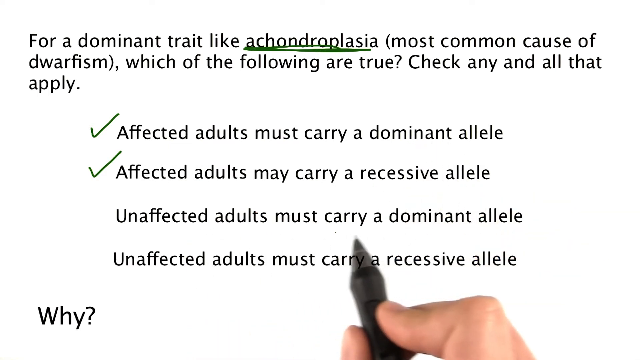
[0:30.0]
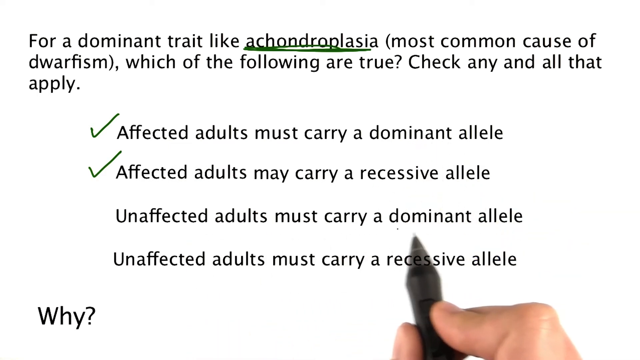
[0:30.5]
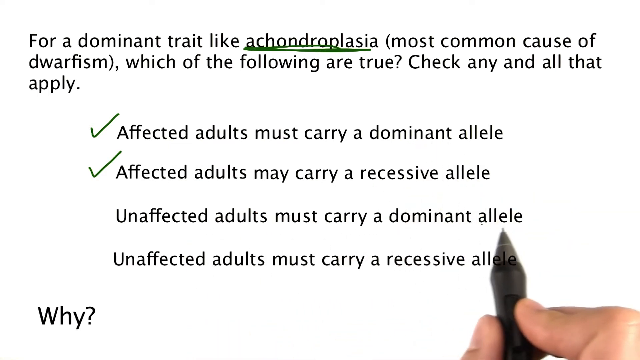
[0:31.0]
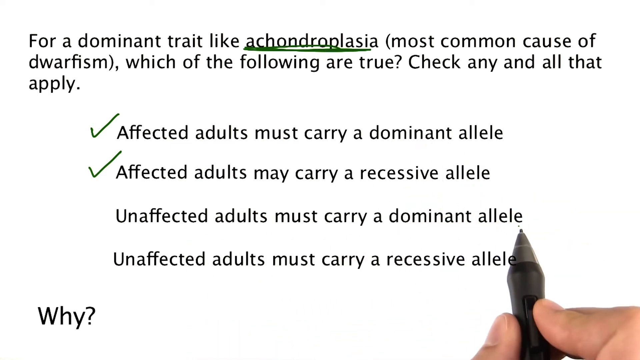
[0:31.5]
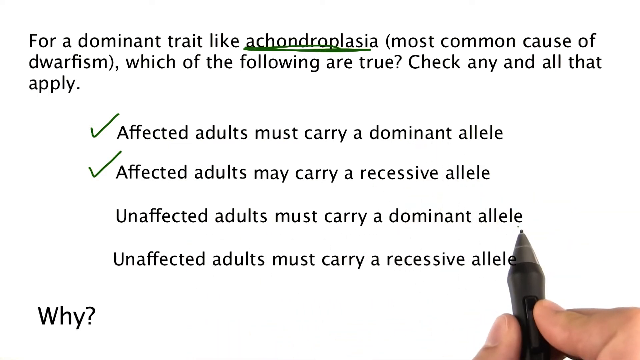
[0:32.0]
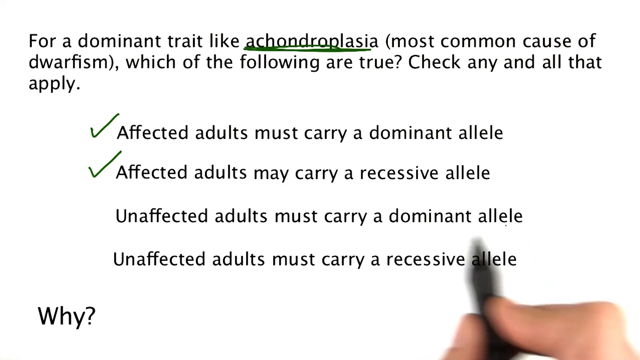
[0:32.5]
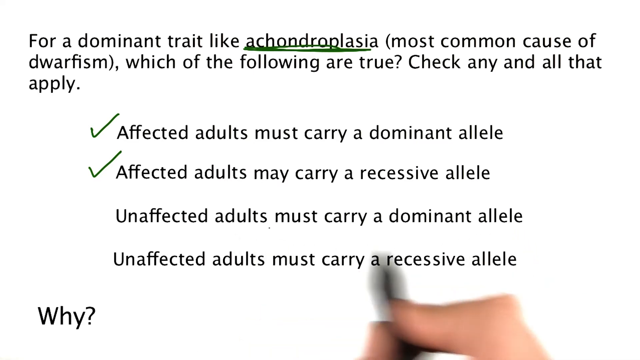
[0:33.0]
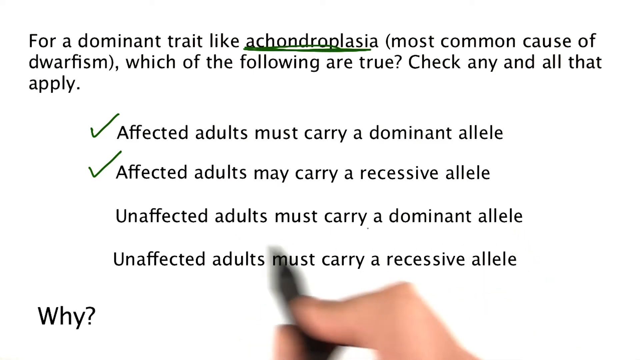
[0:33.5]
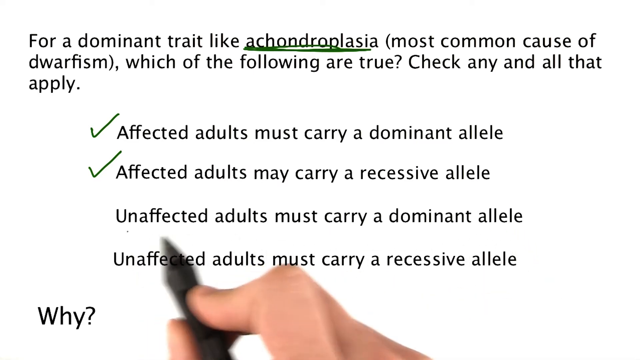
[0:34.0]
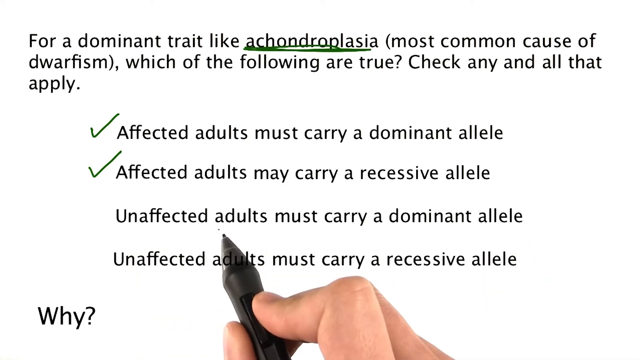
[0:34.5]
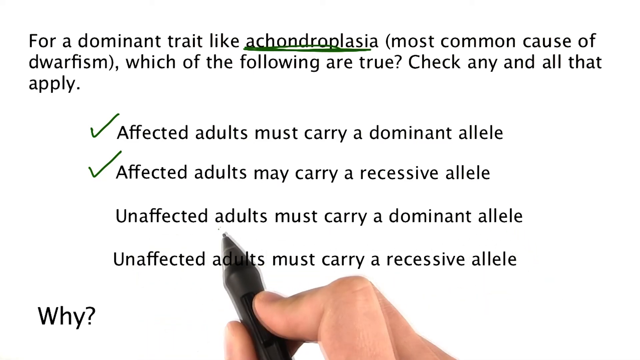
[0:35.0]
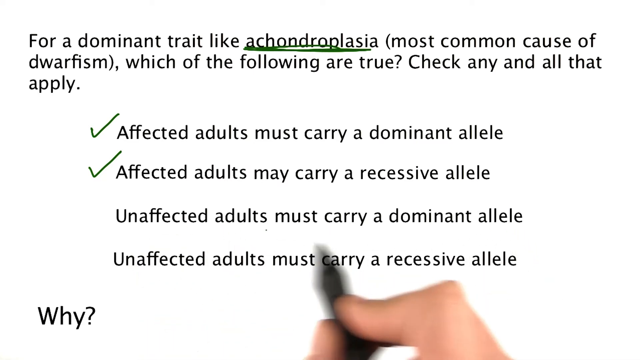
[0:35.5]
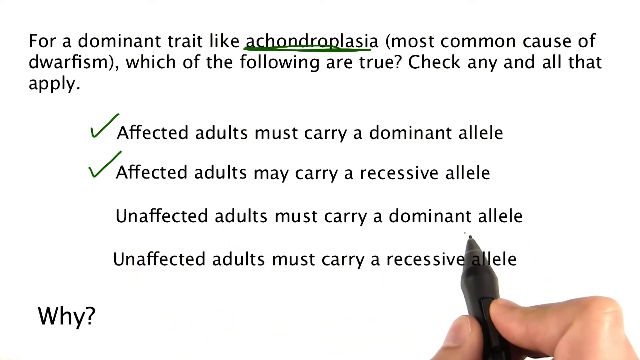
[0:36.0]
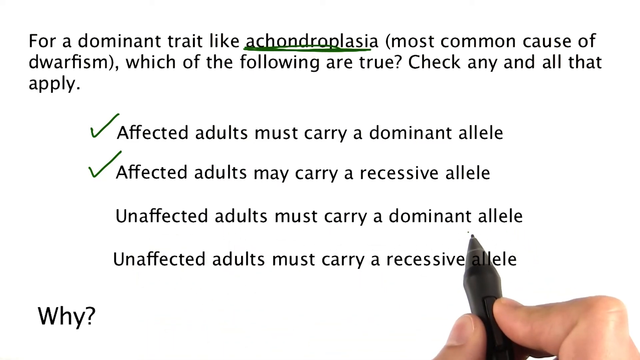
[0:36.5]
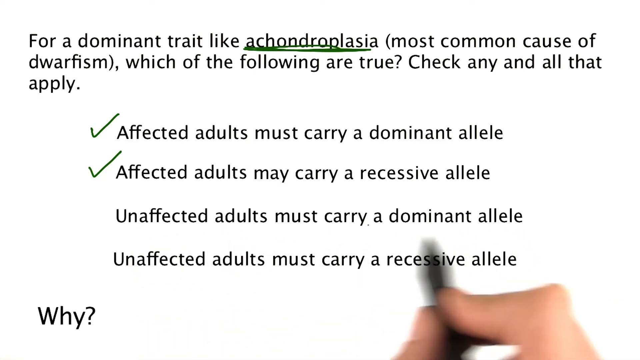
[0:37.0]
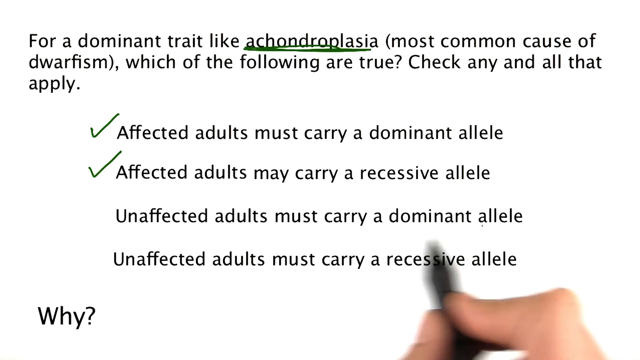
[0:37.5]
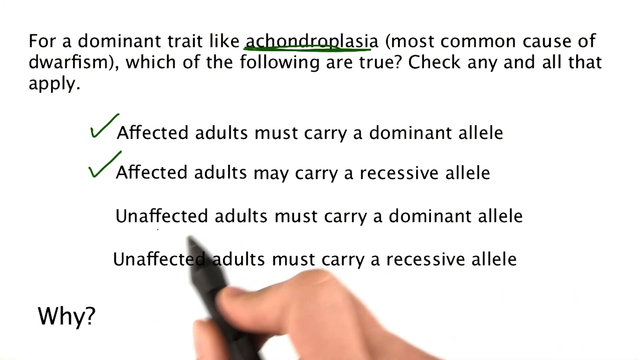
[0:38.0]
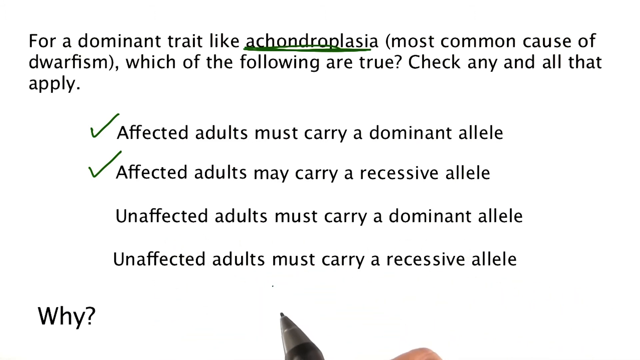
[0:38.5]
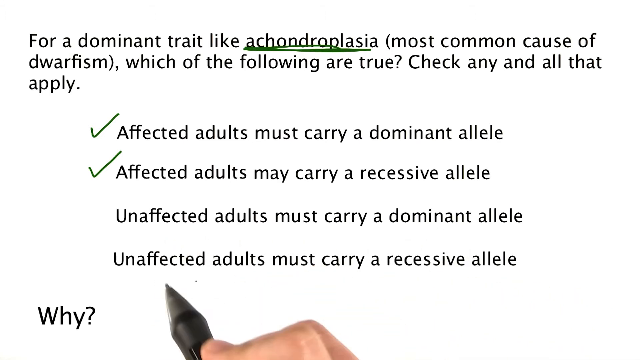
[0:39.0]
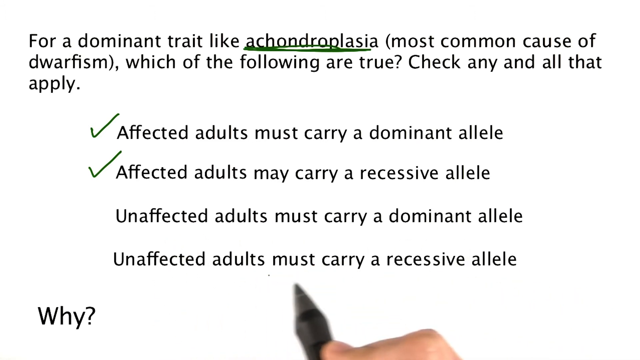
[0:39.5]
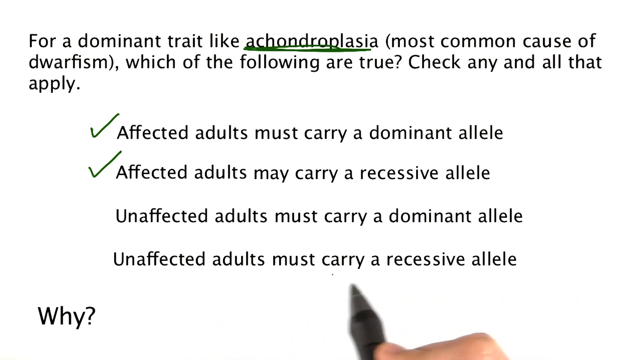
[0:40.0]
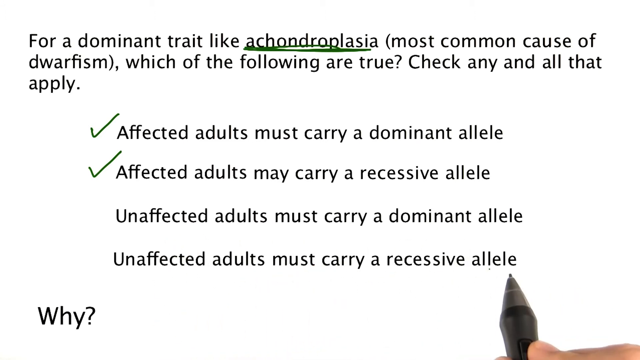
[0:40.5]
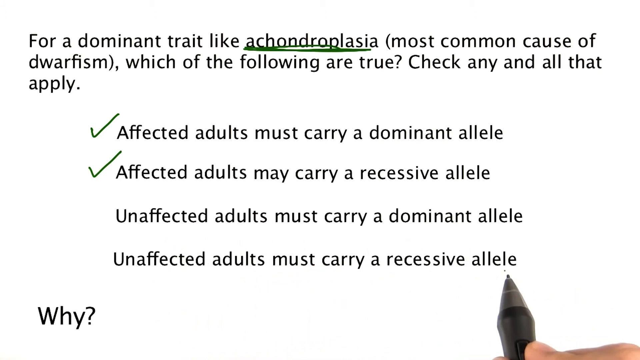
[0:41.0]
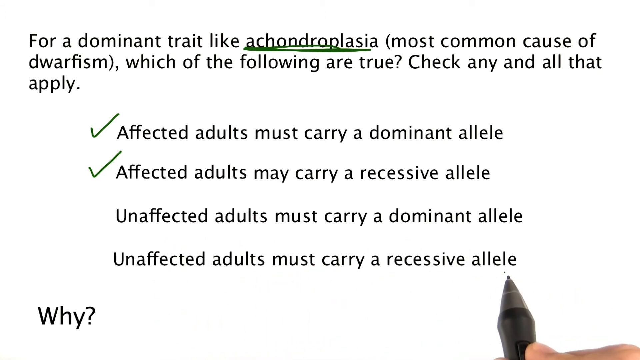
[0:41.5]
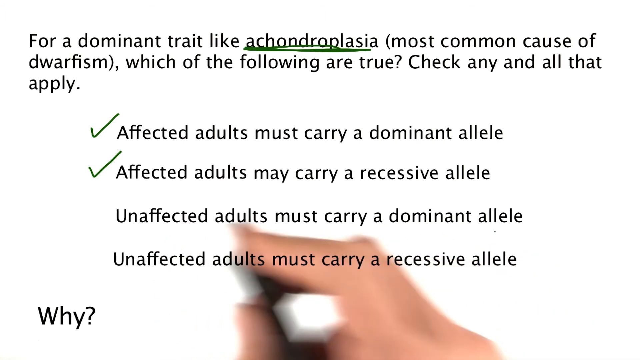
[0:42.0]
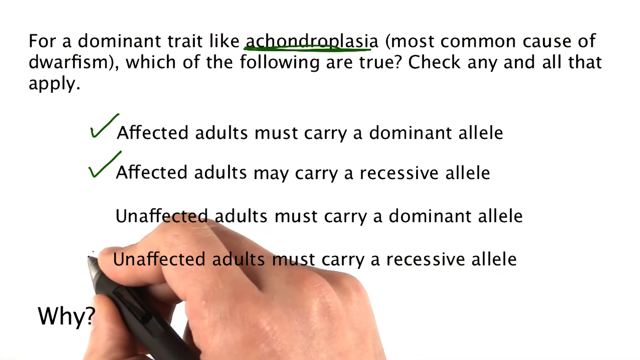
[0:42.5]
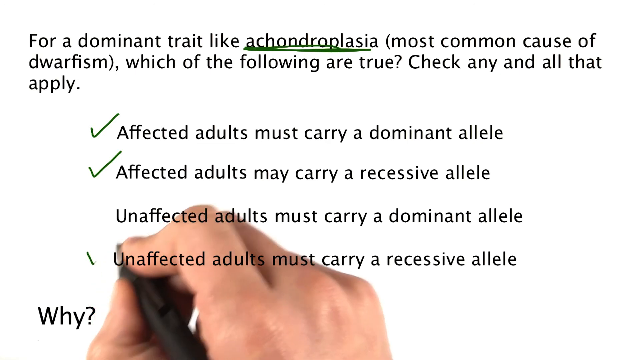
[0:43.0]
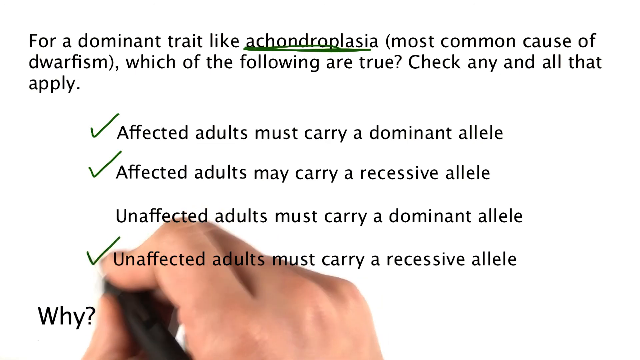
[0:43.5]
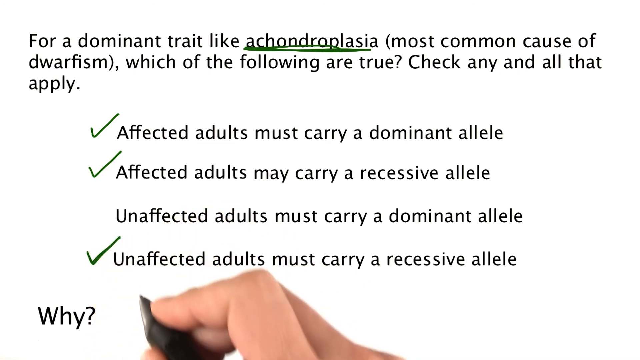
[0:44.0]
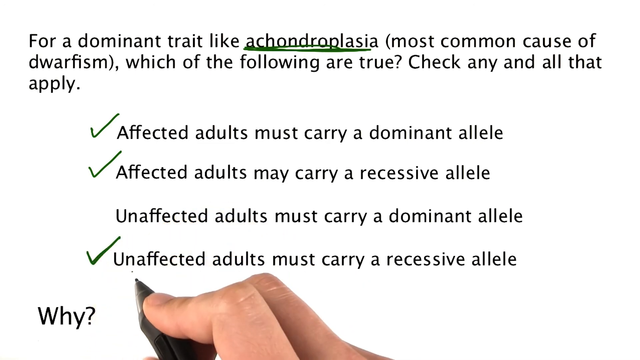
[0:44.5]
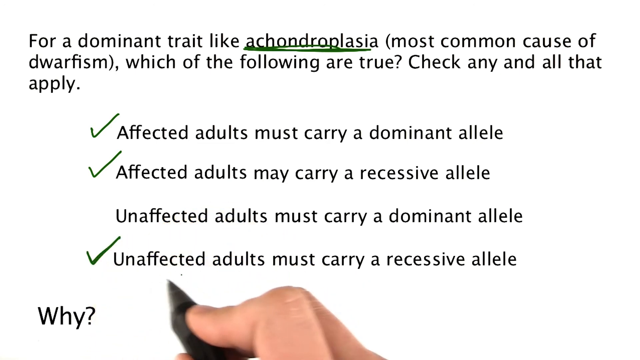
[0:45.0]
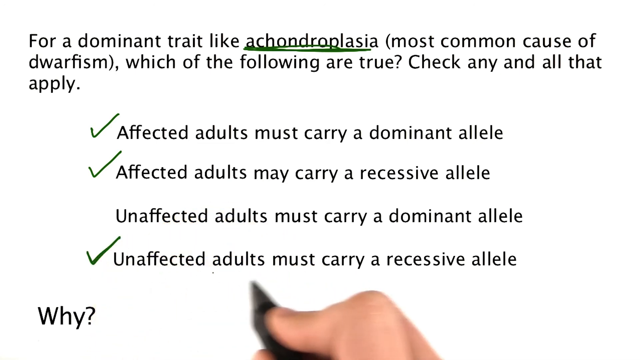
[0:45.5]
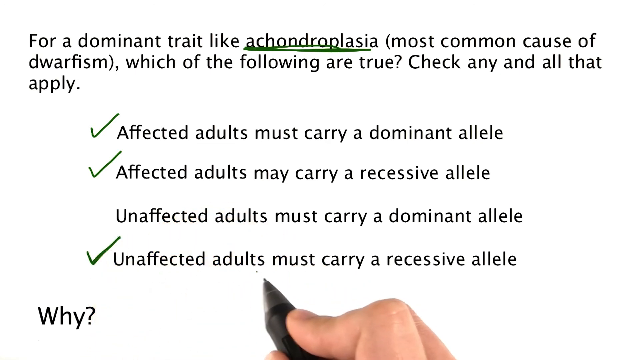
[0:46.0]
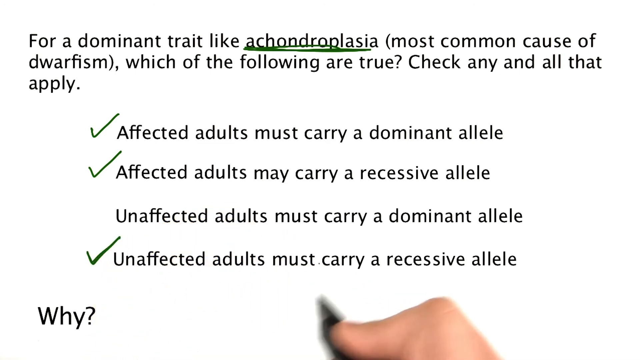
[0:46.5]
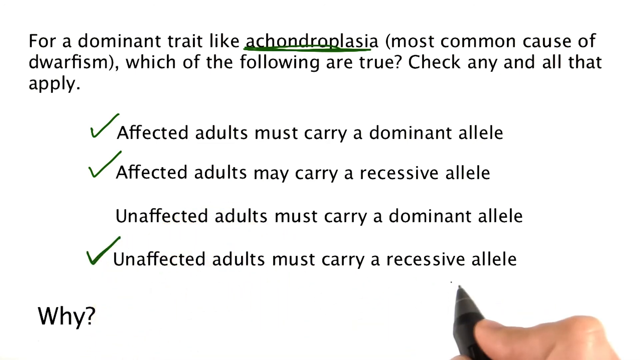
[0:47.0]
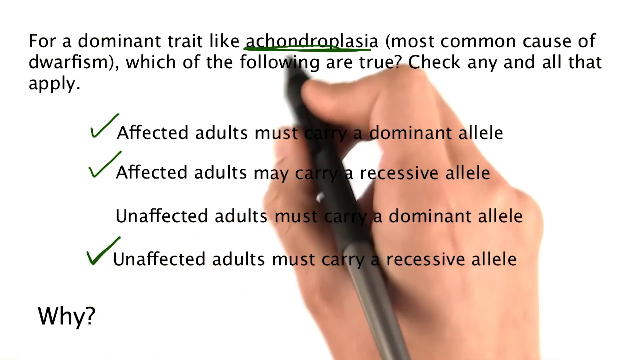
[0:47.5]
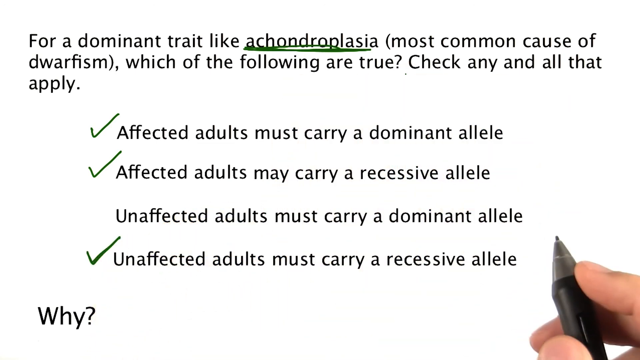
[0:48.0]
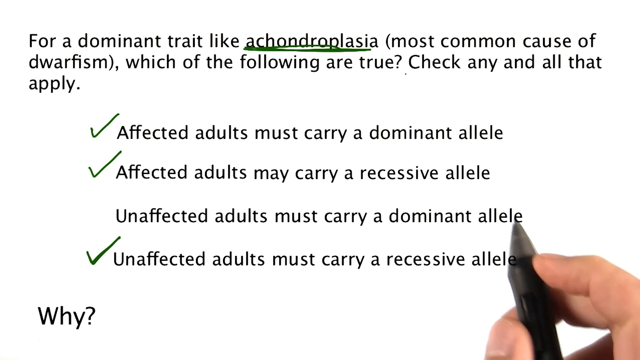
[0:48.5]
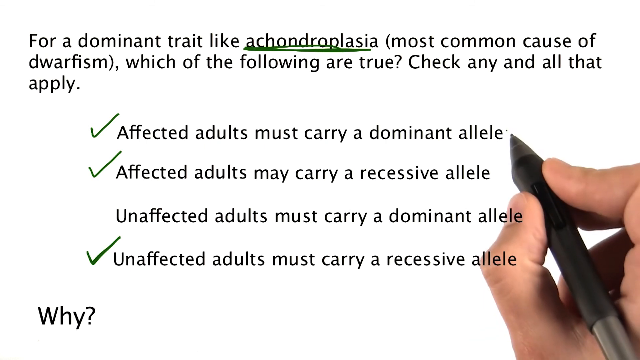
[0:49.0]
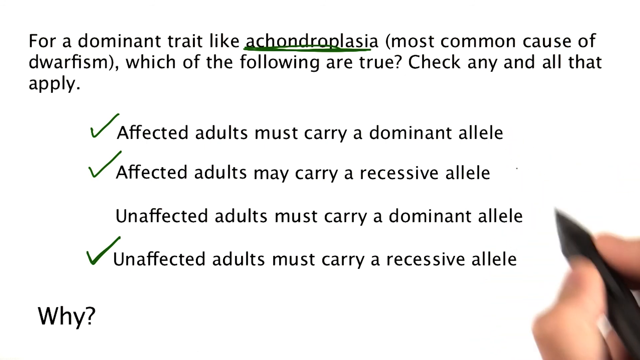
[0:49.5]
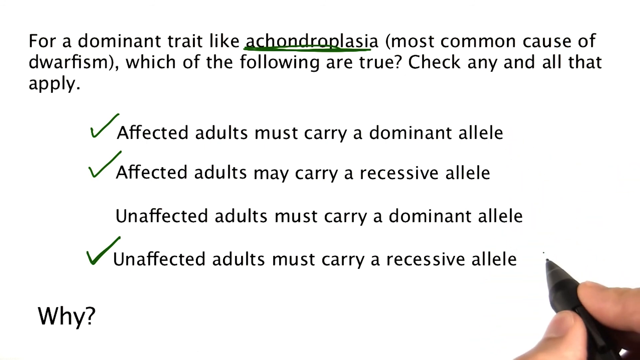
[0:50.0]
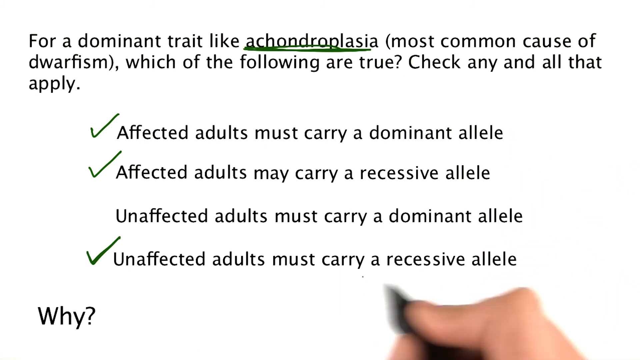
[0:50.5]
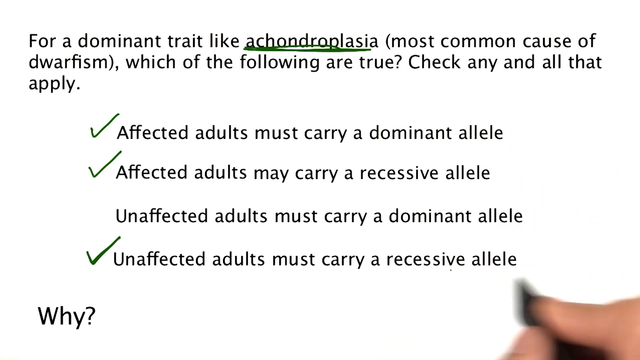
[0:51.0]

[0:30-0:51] The person moves the pen, held in their fingers, over "unaffected adults must carry a dominant allele," then moves on to "unaffected adults must carry a recessive allele." No tick is put on "unaffected adults must carry a dominant allele," but a tick is made on "unaffected adults must carry a recessive allele," suggesting the third statement is considered incorrect. After making the tick, the person moves their hand back to the first and second statements, skips number three, and goes back to number four, leaving three statements ticked.